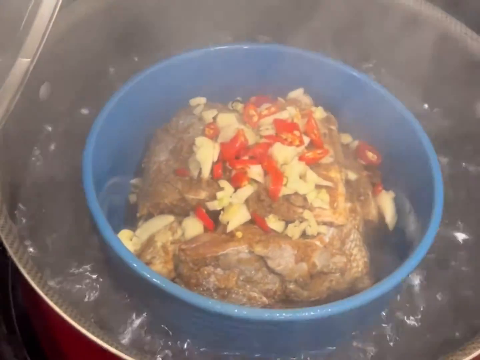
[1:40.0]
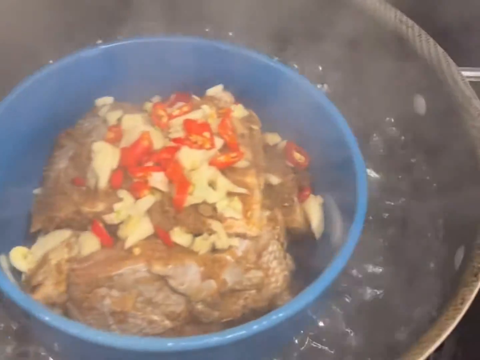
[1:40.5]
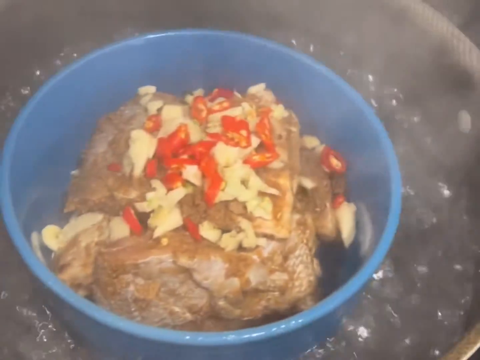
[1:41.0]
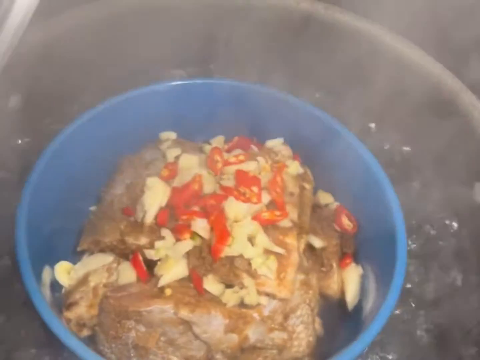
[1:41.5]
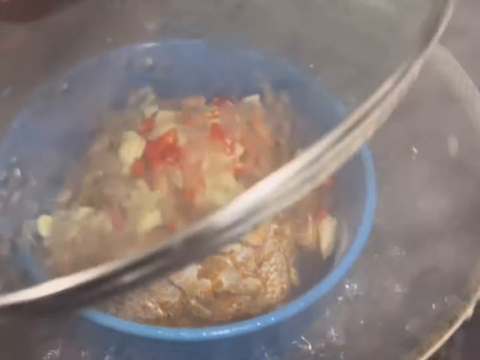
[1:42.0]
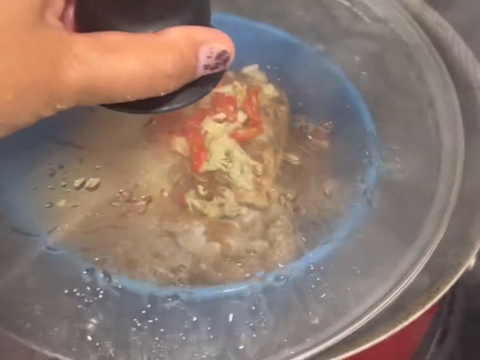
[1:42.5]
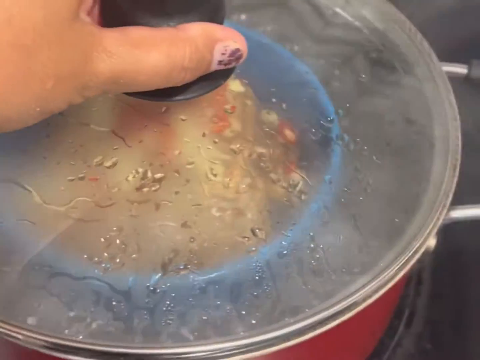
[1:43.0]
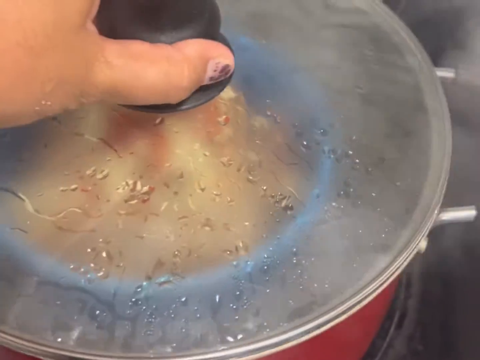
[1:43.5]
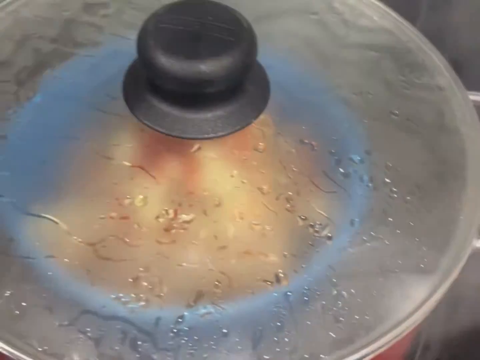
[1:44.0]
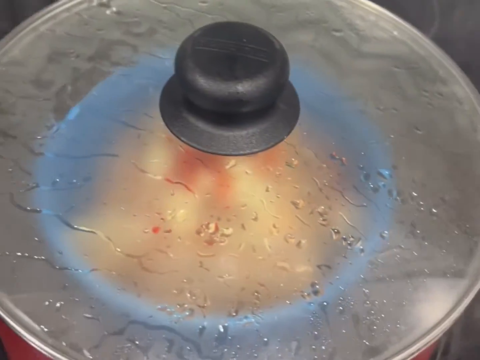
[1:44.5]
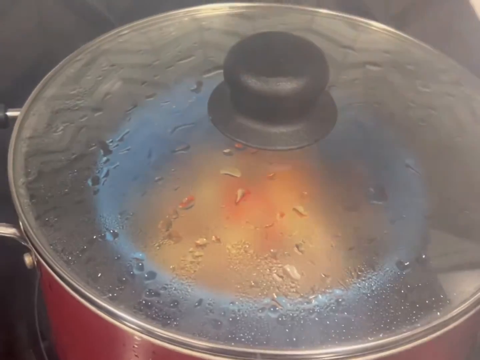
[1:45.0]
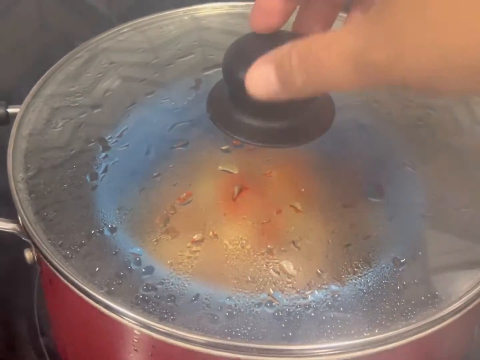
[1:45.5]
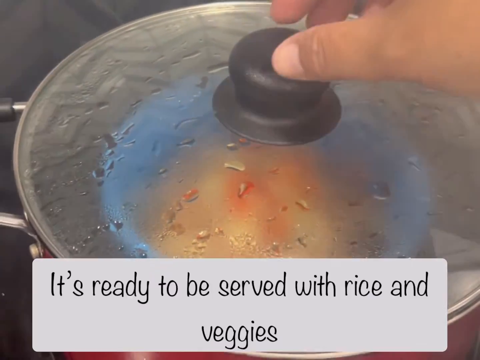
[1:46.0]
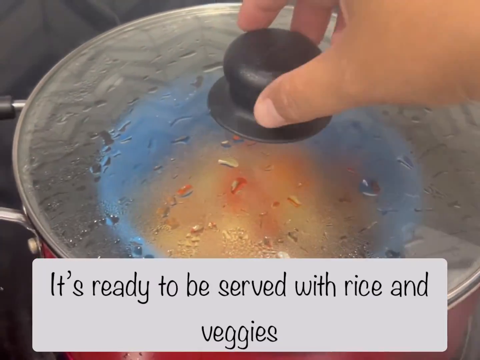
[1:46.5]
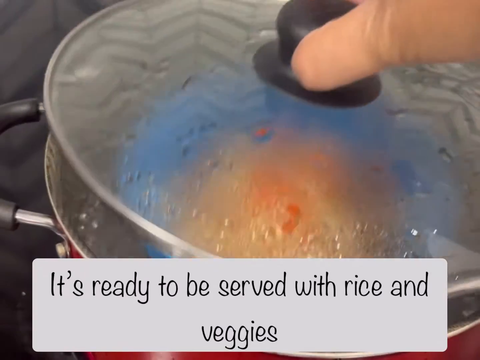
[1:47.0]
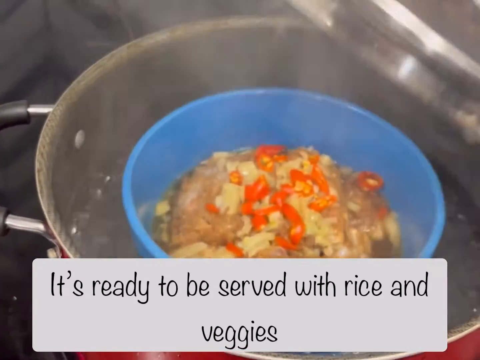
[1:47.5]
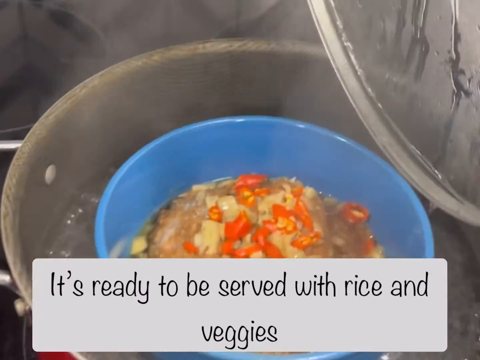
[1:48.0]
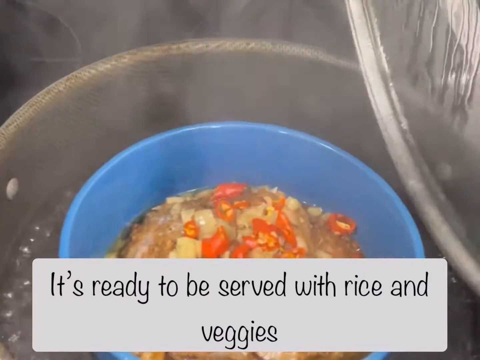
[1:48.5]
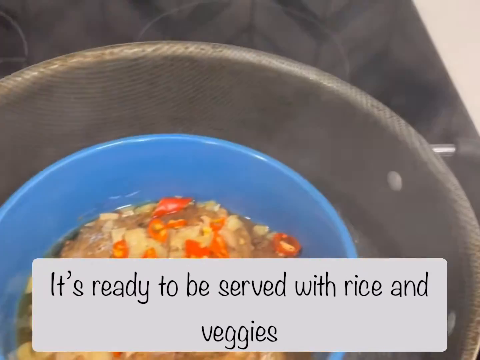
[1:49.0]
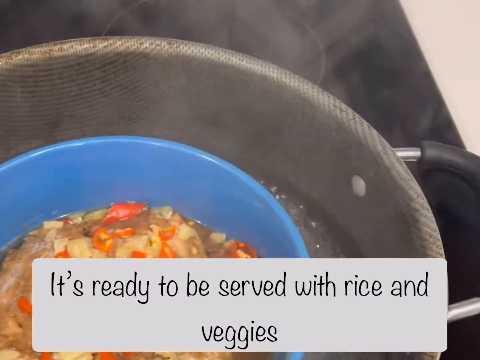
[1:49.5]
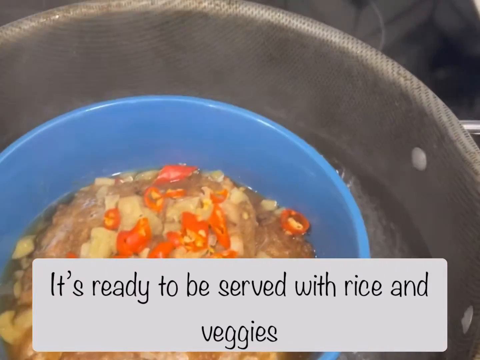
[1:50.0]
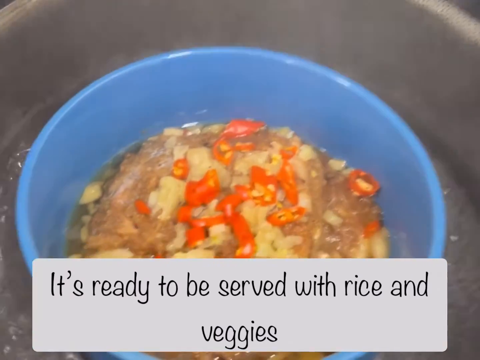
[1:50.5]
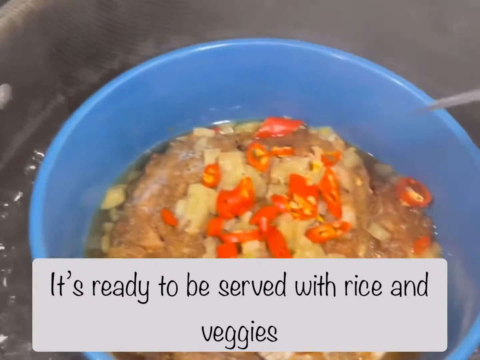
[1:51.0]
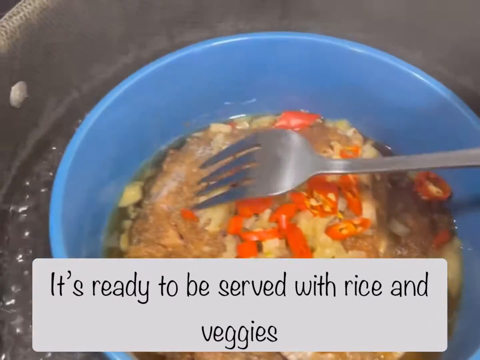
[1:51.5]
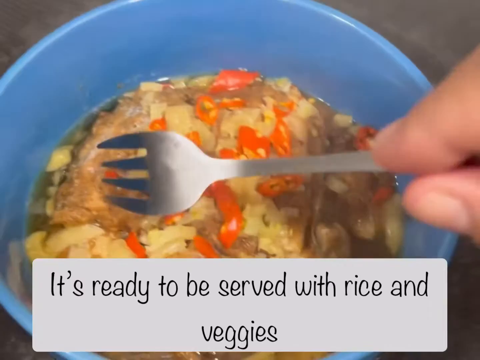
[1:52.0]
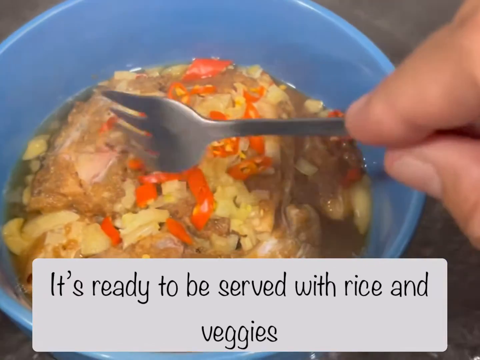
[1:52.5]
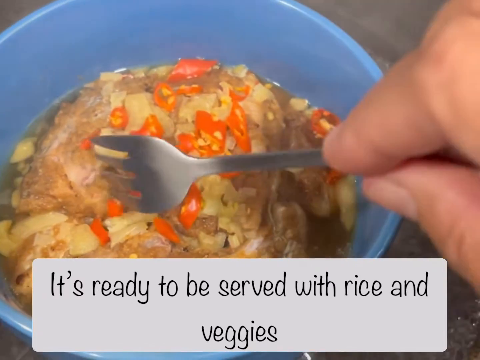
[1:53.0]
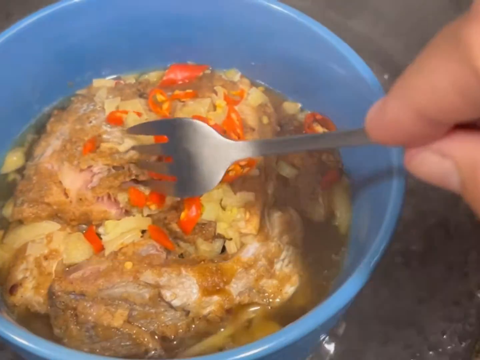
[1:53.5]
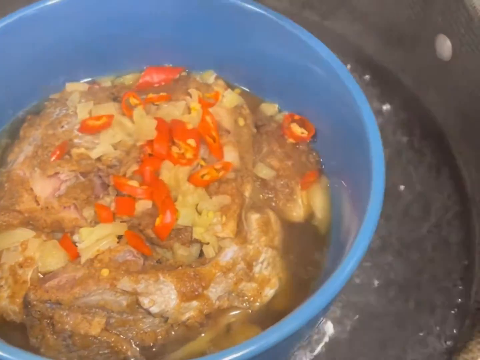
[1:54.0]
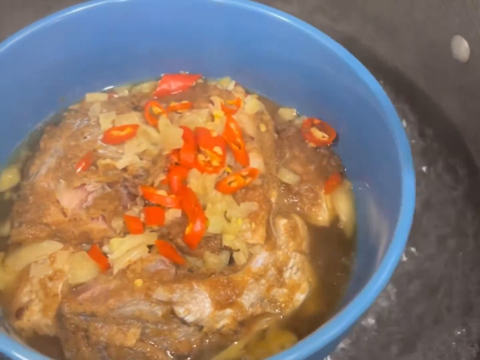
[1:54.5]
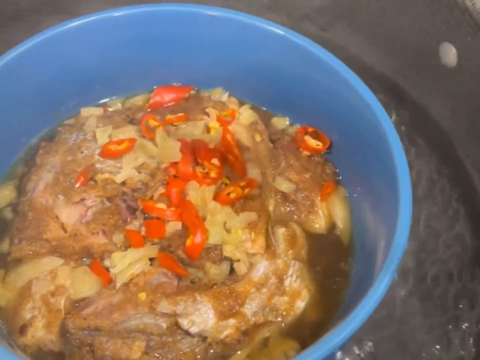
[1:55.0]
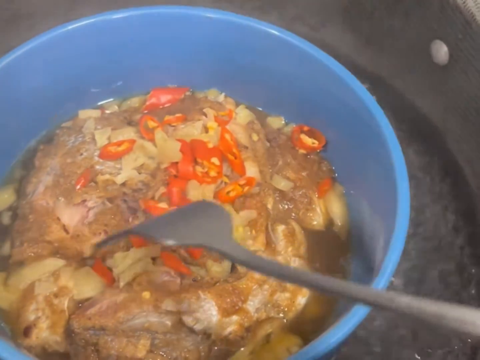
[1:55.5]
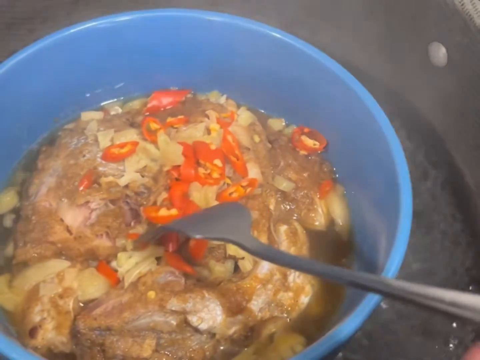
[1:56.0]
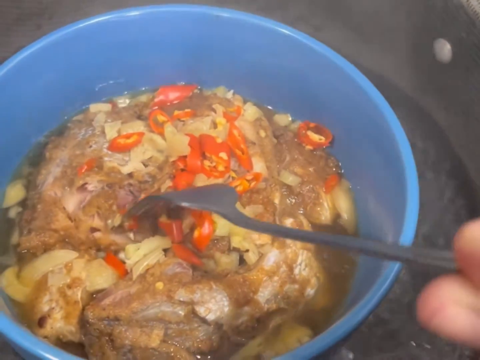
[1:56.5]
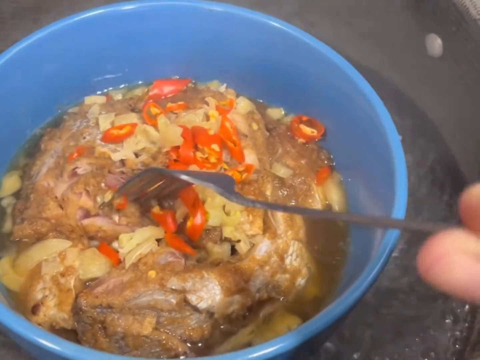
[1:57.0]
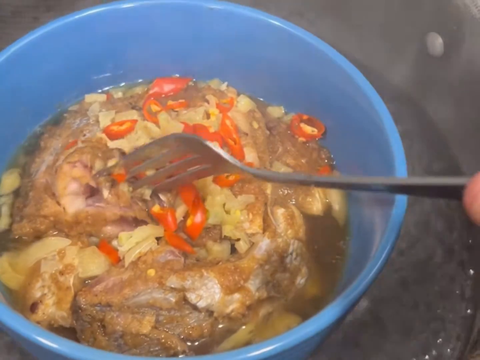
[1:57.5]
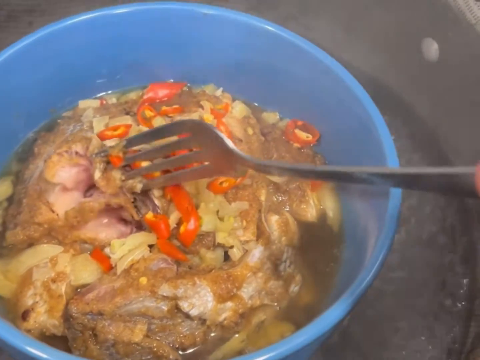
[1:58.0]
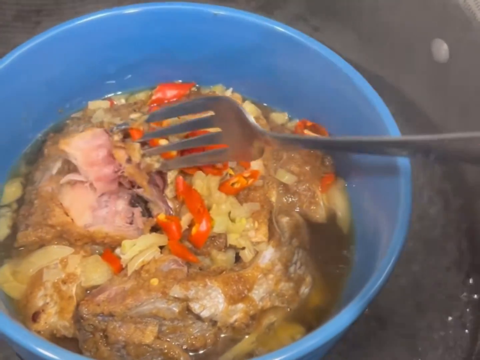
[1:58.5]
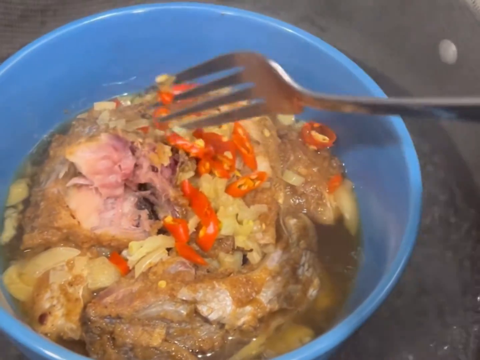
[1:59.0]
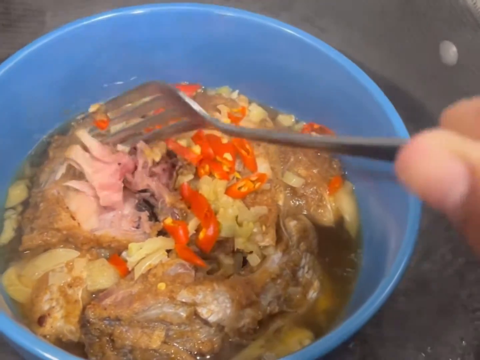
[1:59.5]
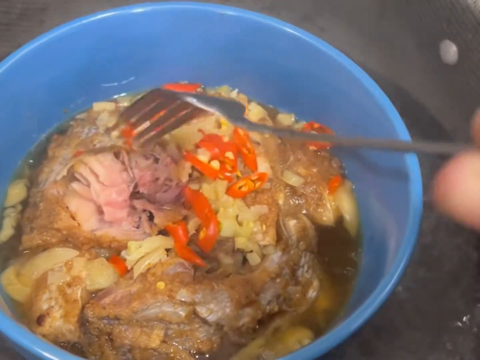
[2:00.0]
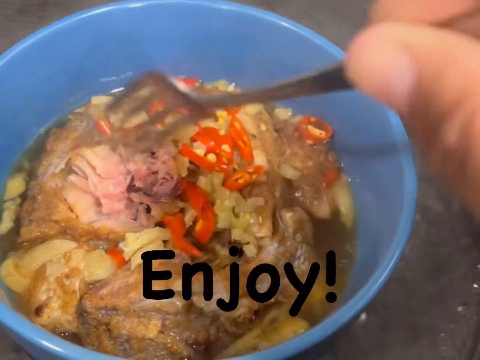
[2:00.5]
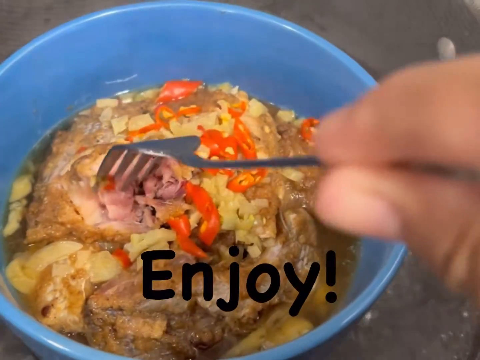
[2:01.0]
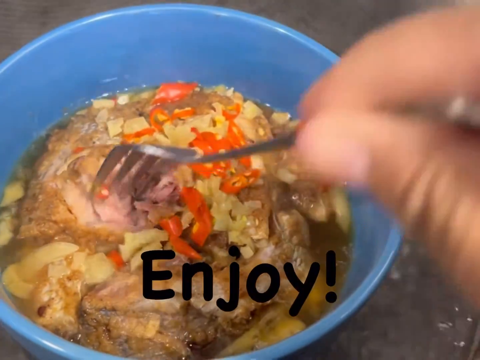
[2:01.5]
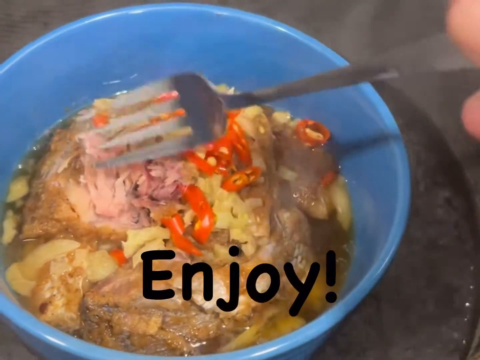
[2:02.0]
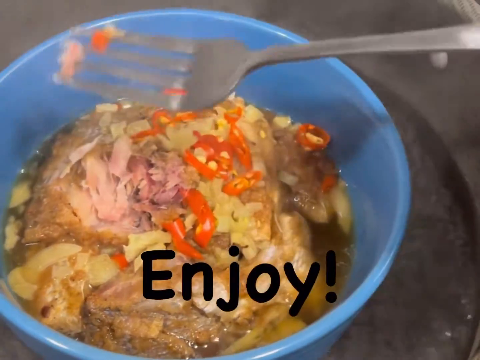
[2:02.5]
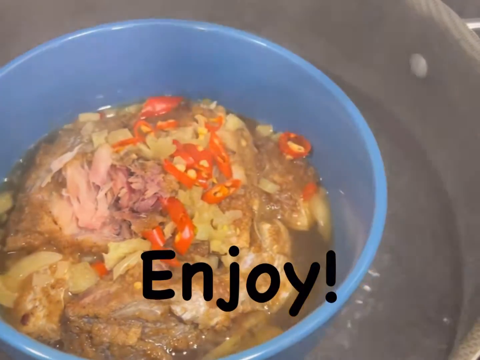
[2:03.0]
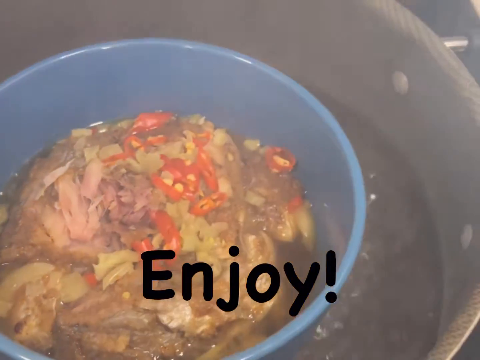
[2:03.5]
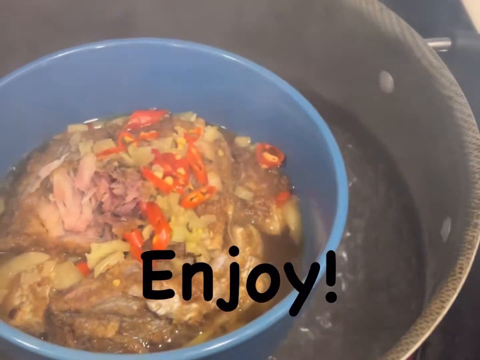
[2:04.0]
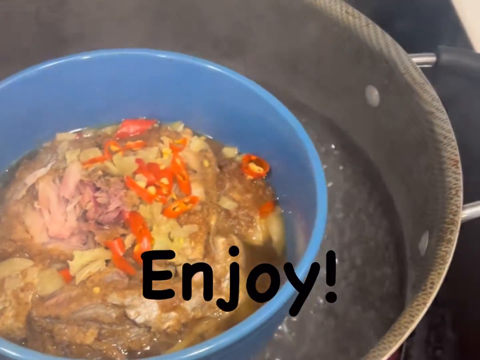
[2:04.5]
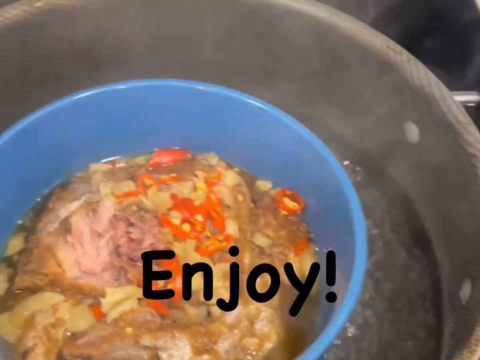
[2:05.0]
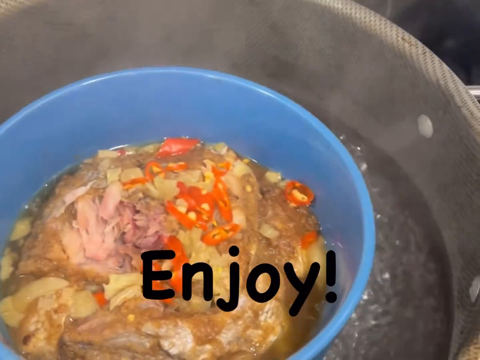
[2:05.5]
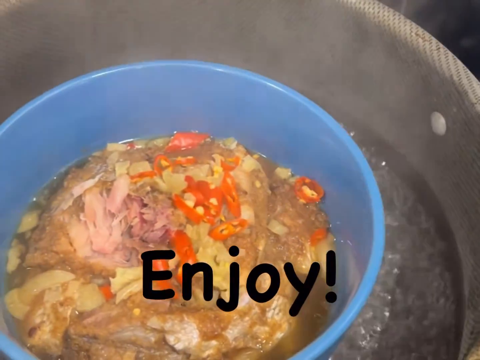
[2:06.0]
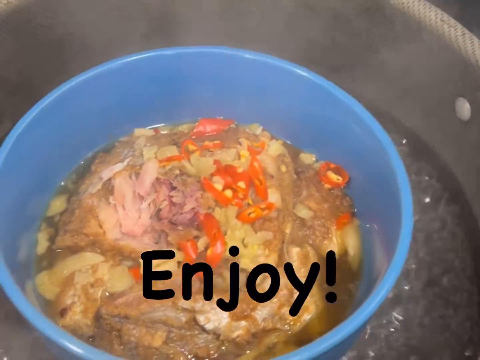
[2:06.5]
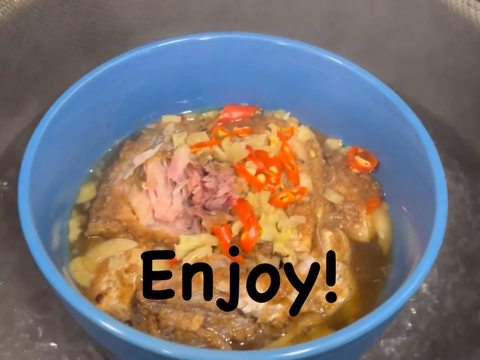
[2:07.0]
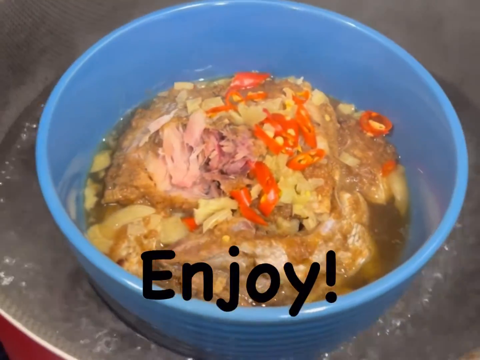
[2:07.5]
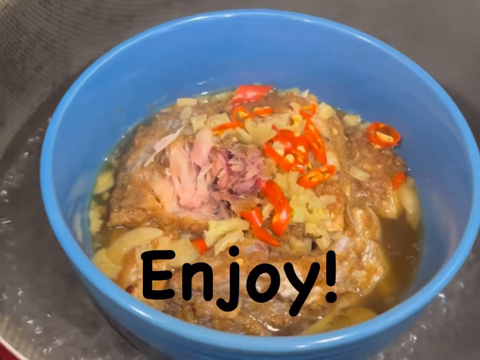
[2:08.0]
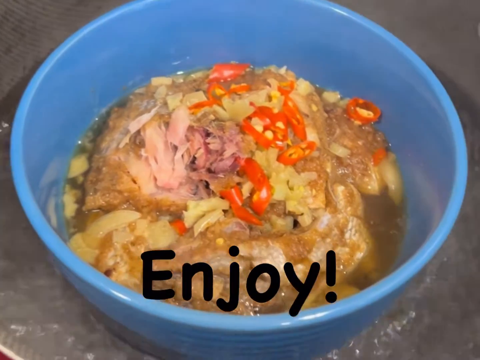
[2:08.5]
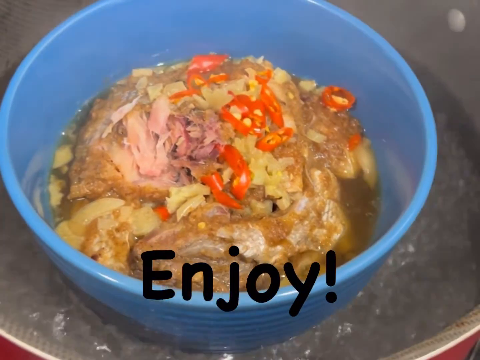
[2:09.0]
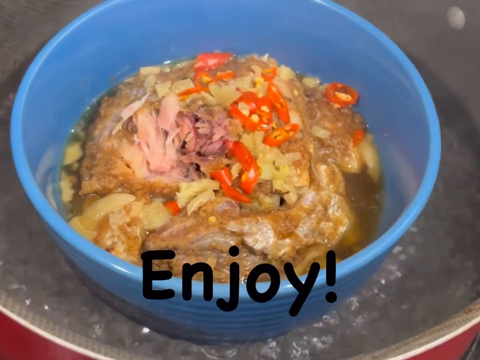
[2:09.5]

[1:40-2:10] The food is being steamed inside a blue bowl in a pan of water, and the steaming process is shown. There appear to be chillies and possibly something else on top. When it is finished, text says it can be enjoyed with some vegetables and some rice, and at the end of the video a message pops up saying to enjoy the food. Some time has clearly passed during the cooking, but how much is not shown.